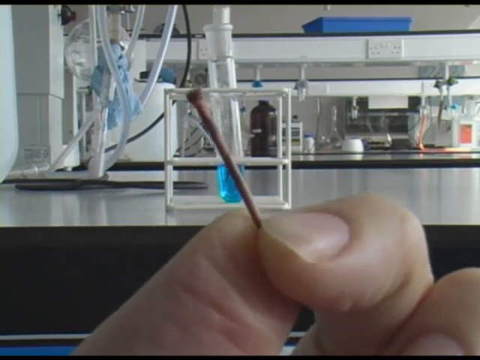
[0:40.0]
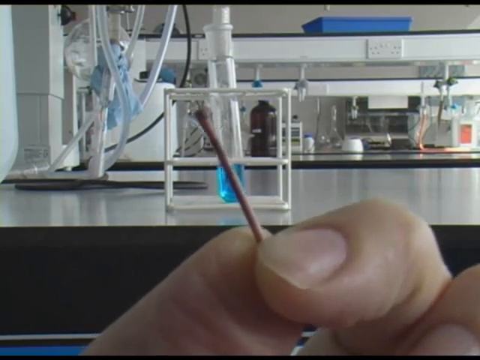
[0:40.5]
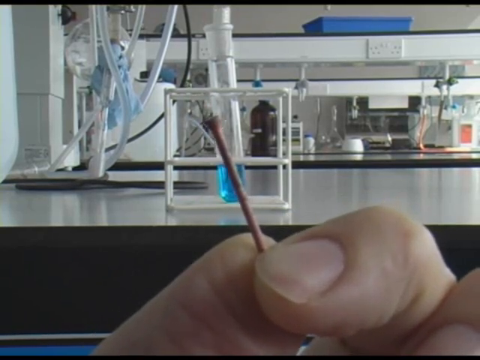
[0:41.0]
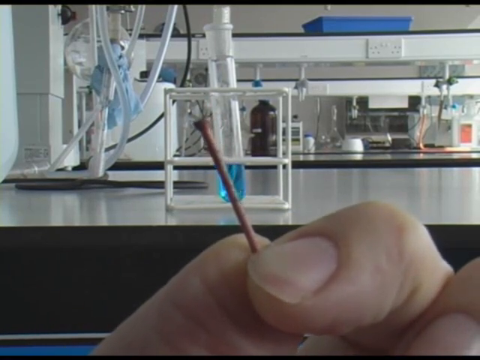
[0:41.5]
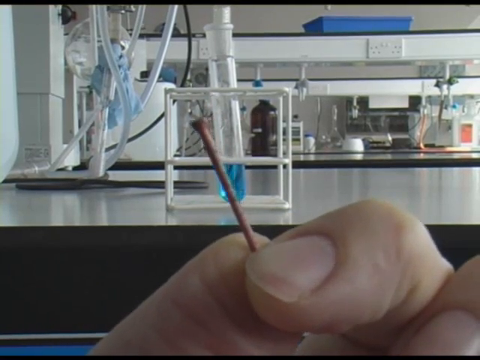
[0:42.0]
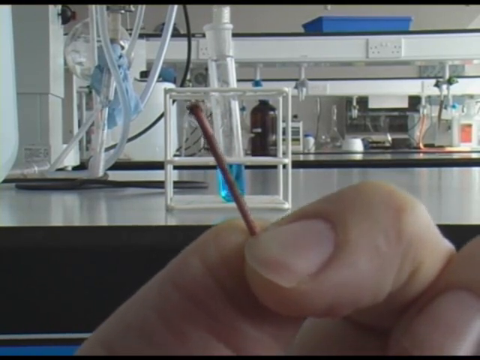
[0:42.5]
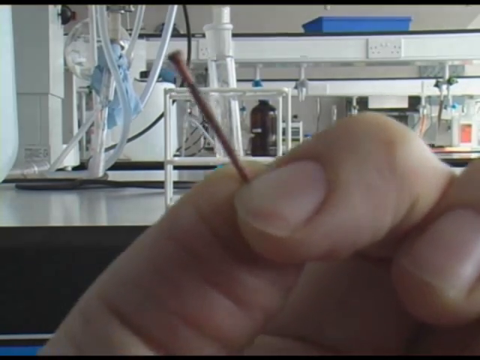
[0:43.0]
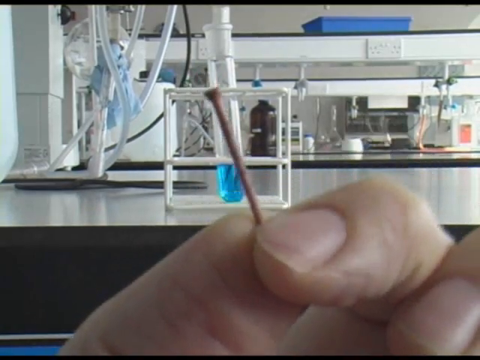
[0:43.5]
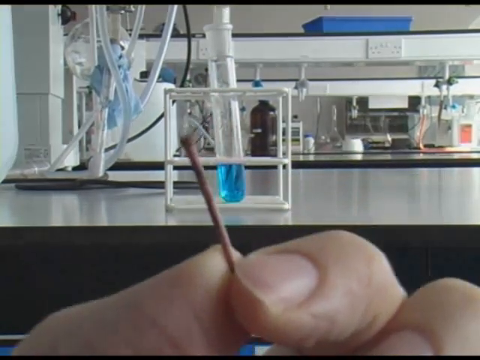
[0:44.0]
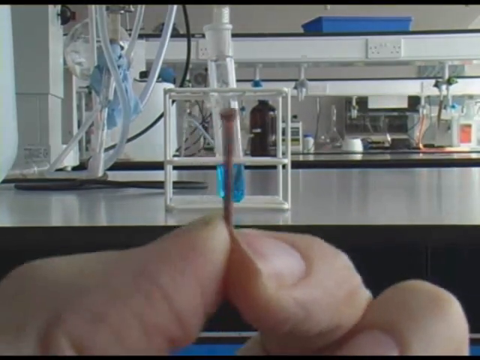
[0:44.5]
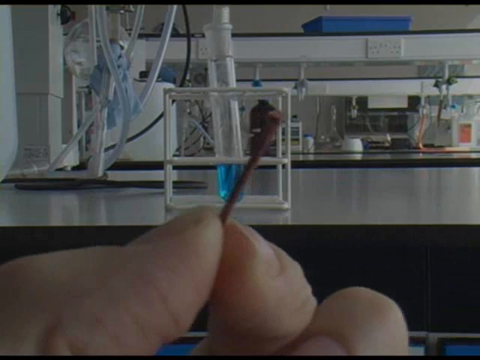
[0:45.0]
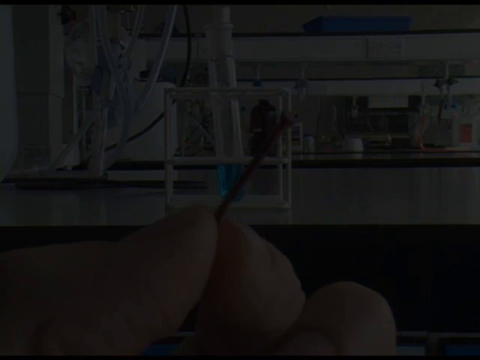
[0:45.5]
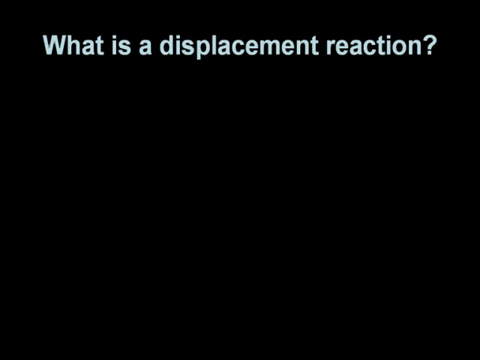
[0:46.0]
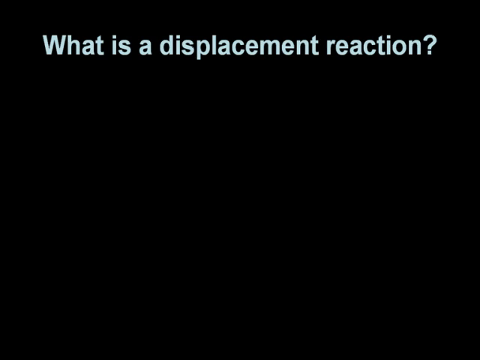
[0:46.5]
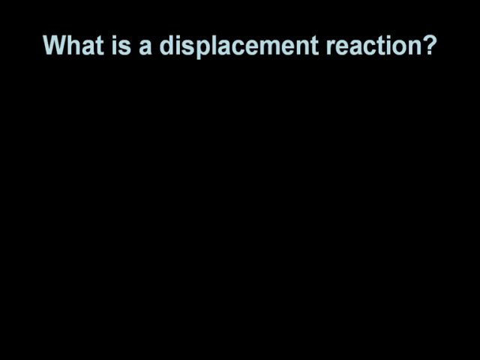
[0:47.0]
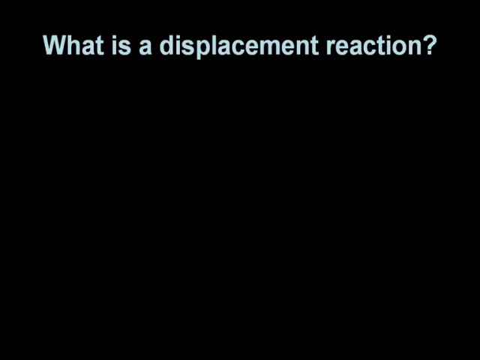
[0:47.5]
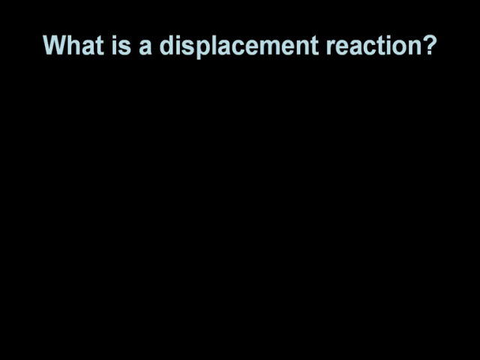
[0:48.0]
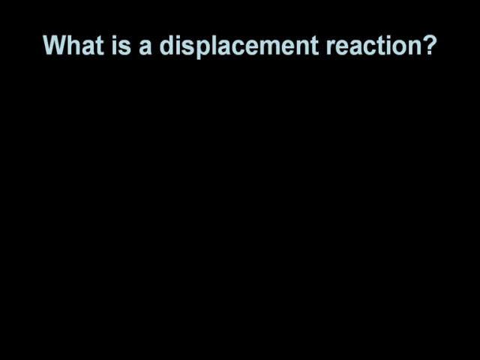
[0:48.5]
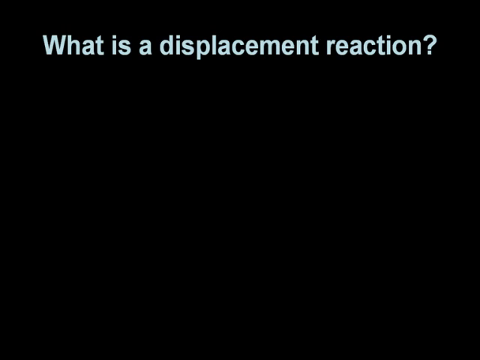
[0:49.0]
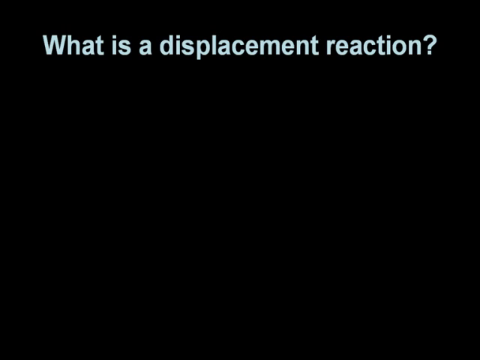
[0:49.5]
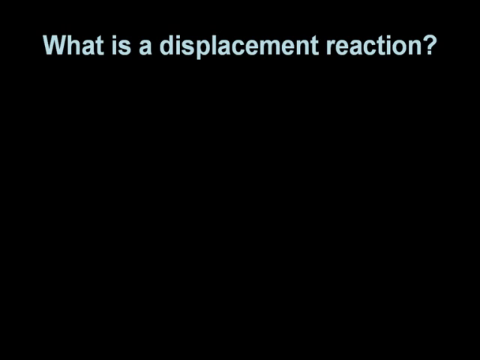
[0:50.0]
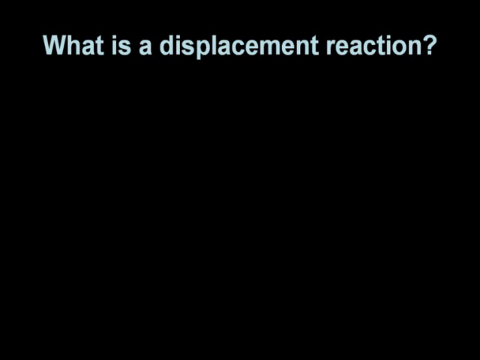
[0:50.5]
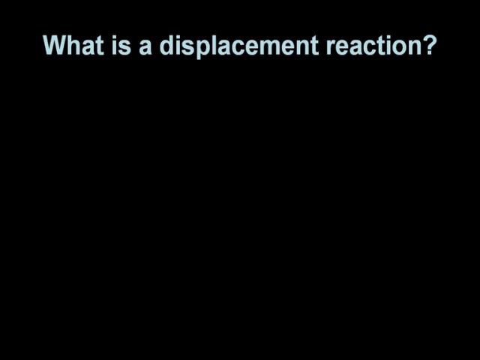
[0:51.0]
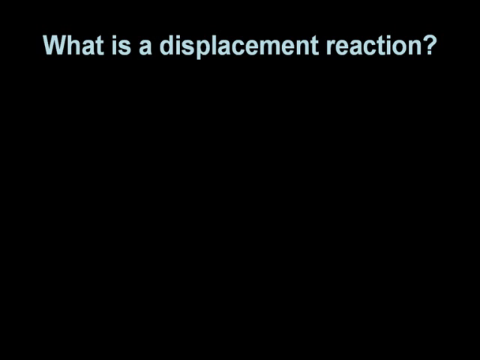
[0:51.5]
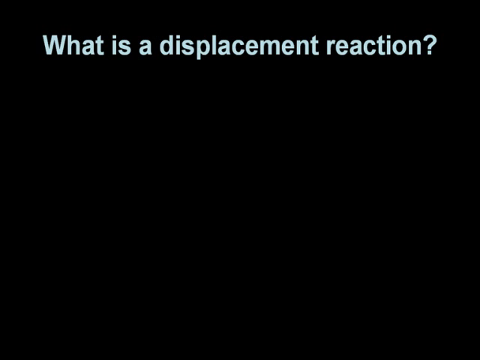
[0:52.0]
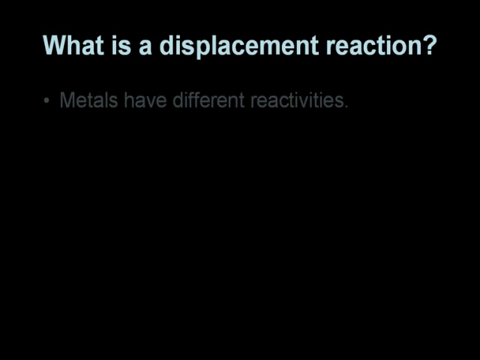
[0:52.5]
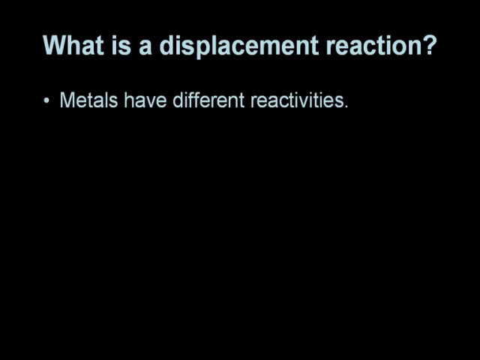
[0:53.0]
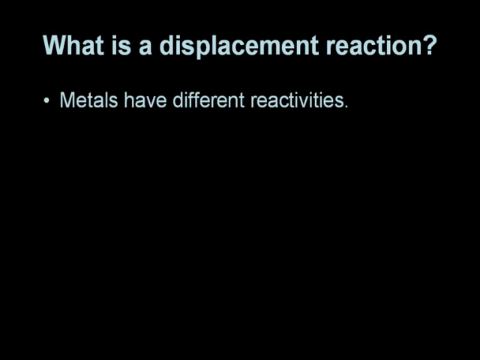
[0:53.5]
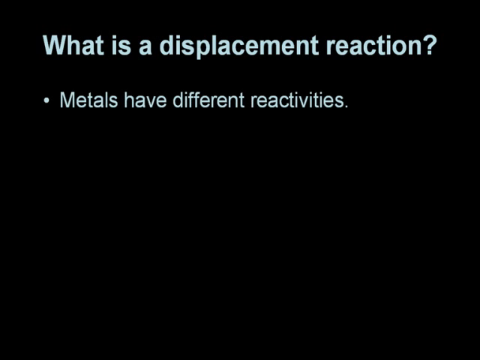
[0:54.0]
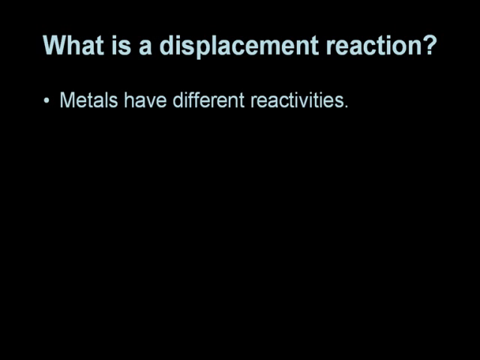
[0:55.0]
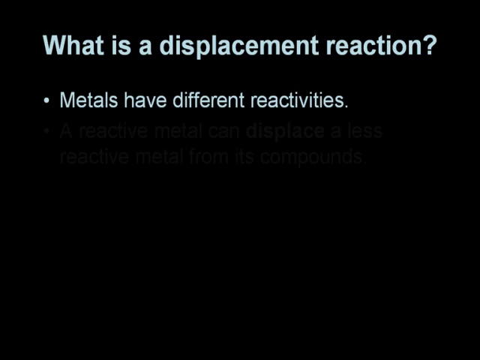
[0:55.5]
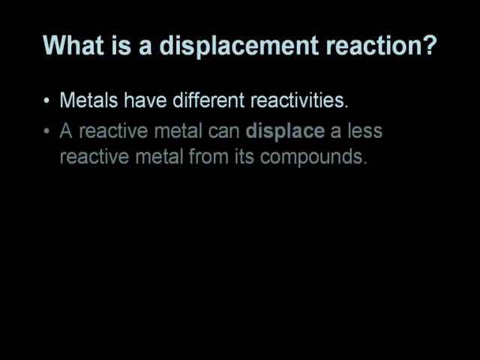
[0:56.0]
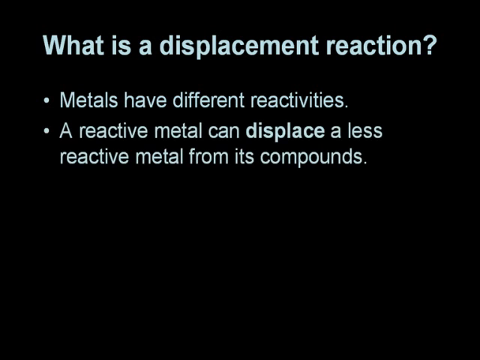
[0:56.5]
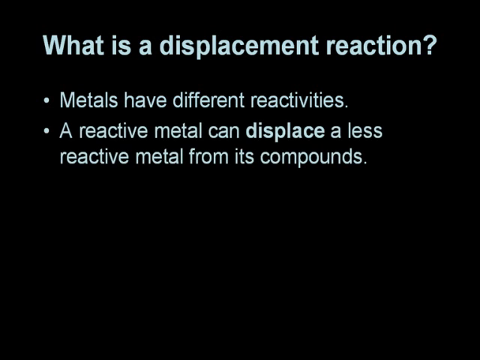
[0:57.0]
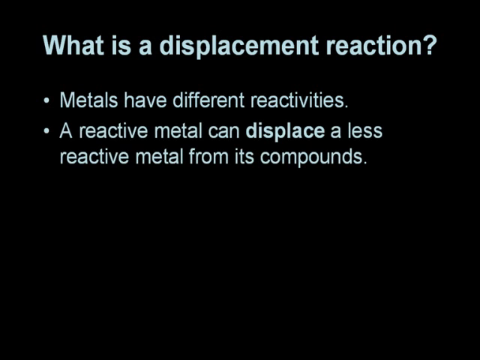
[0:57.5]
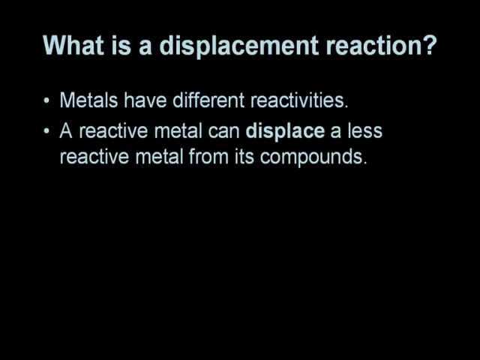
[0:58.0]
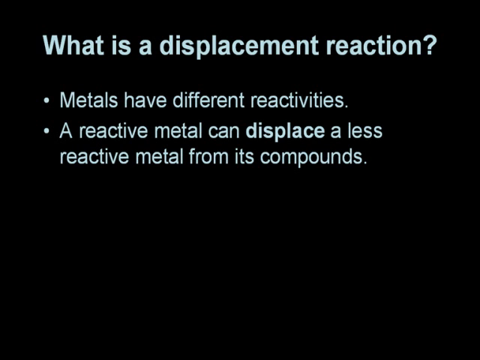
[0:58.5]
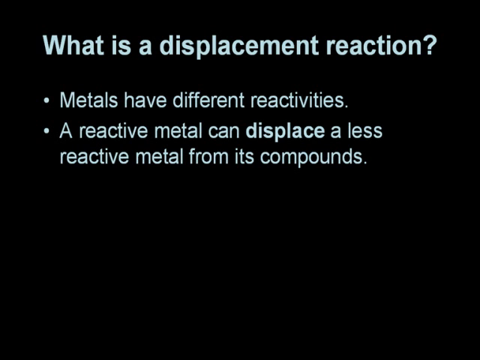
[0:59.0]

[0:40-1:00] A close-up shows the person's hand with trimmed nails, holding a copper-looking nail between the thumb and pointer finger, which they continue to show from all different sides. The slide then changes to a black background with the title "What is displacement reaction?" Words come onto the screen as bullet points: "metals have different reactivities" and then "a reactive metal can displace a less reactive metal from its compounds", with "displace" written more boldly than the rest of the words.